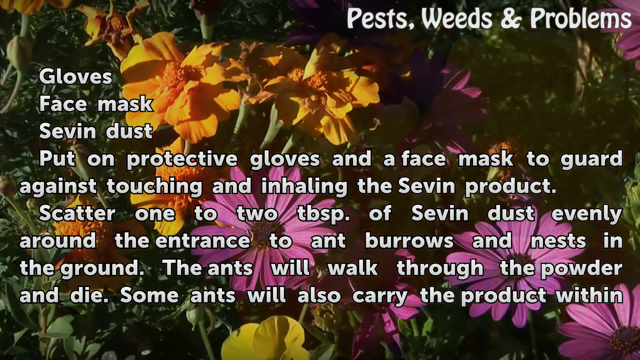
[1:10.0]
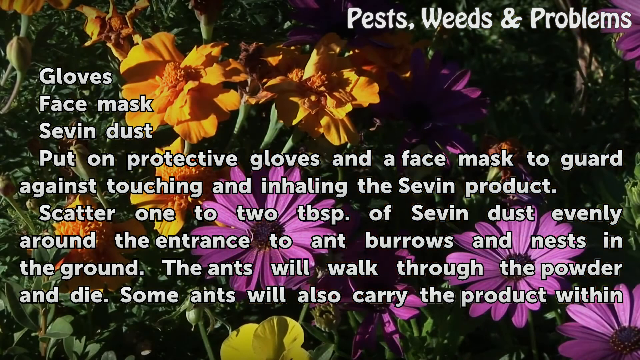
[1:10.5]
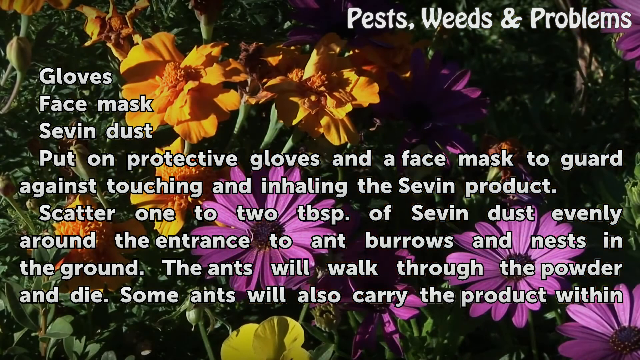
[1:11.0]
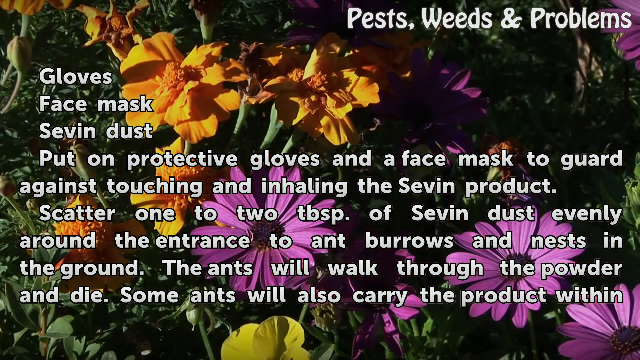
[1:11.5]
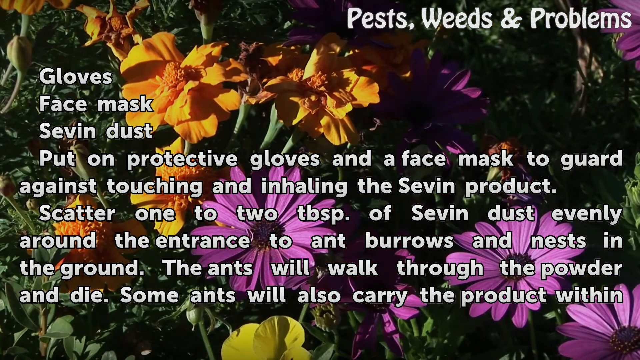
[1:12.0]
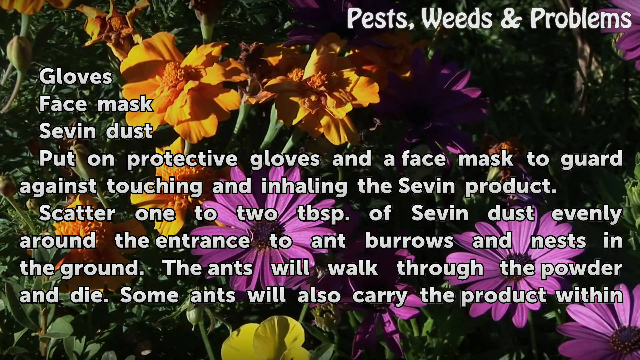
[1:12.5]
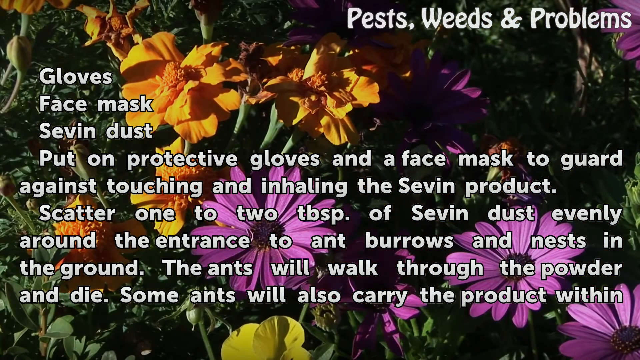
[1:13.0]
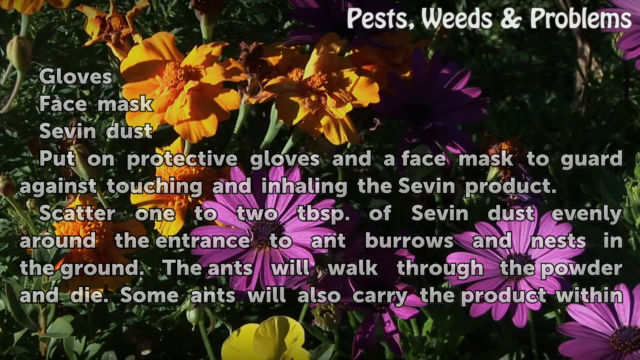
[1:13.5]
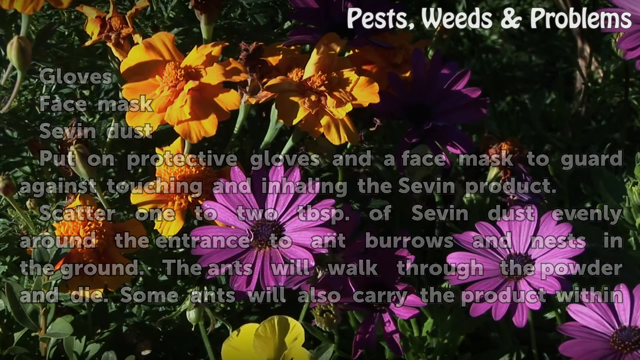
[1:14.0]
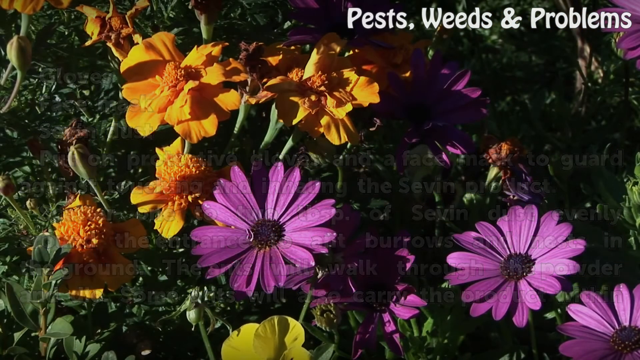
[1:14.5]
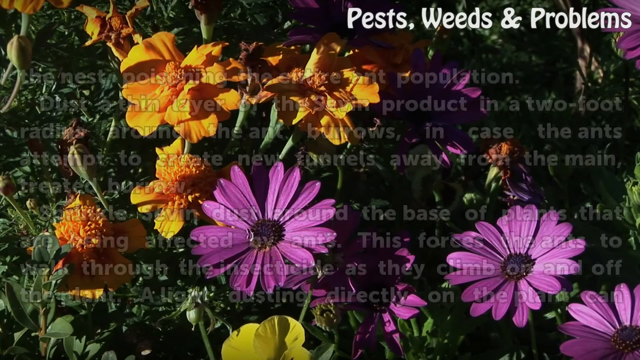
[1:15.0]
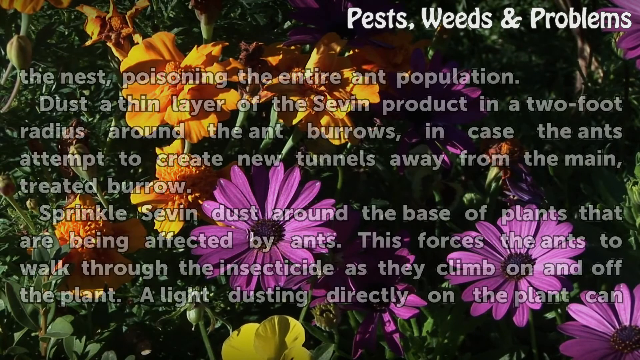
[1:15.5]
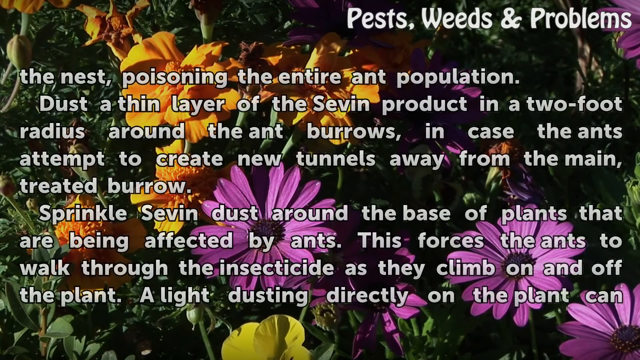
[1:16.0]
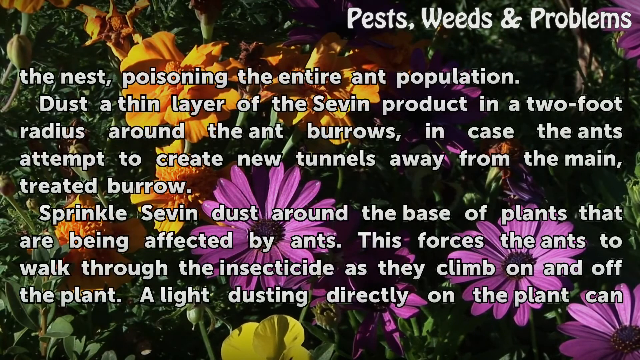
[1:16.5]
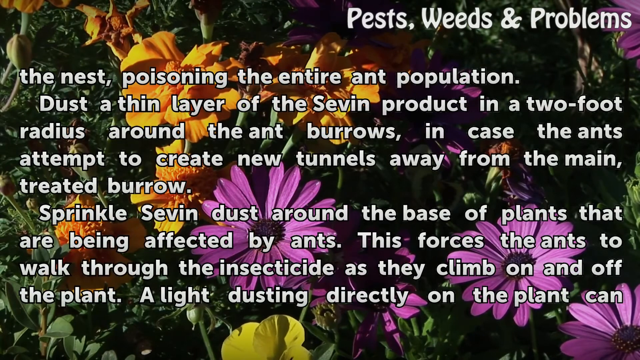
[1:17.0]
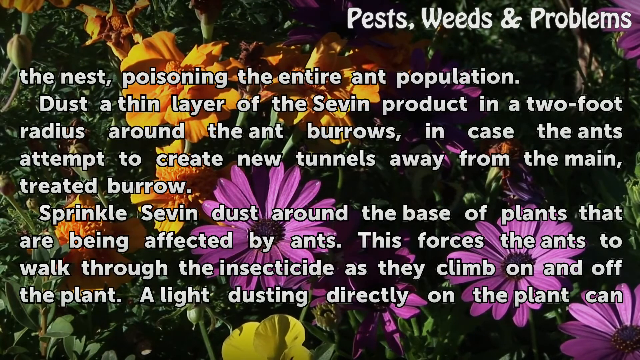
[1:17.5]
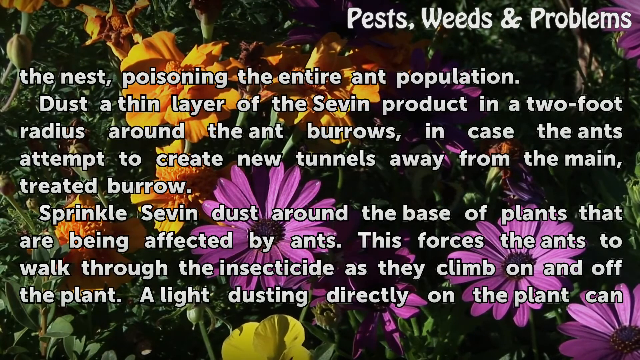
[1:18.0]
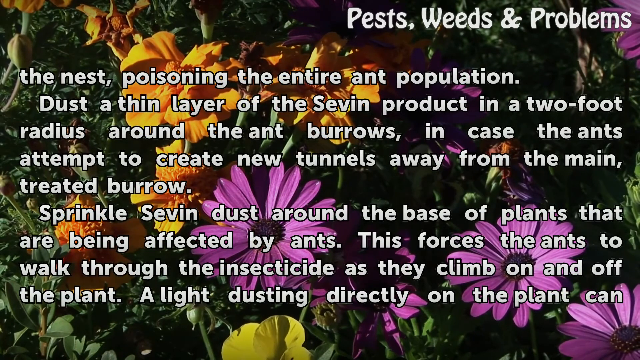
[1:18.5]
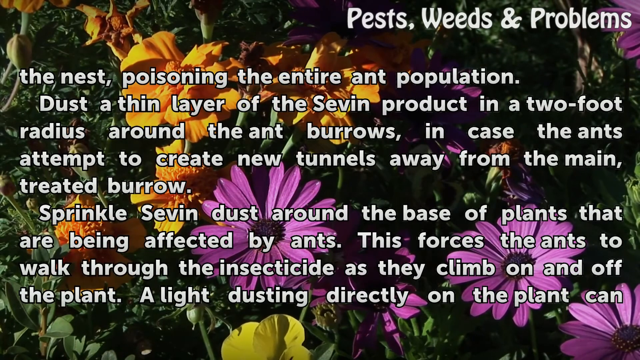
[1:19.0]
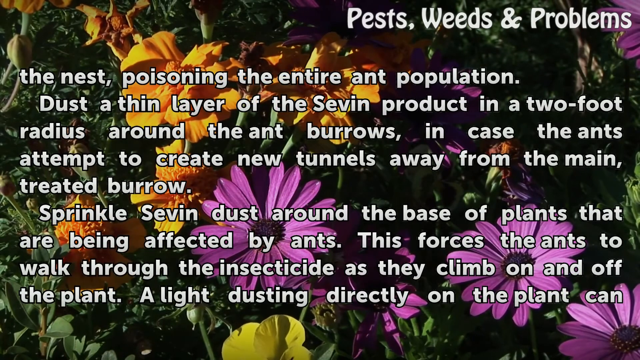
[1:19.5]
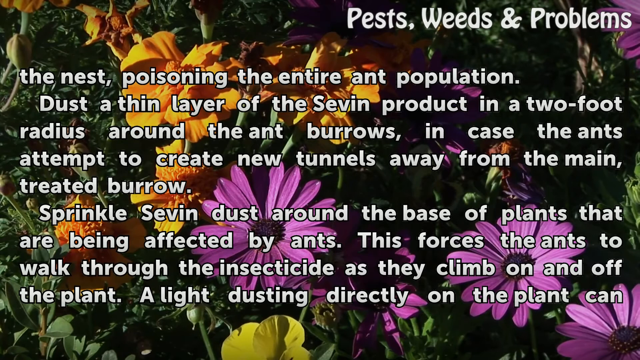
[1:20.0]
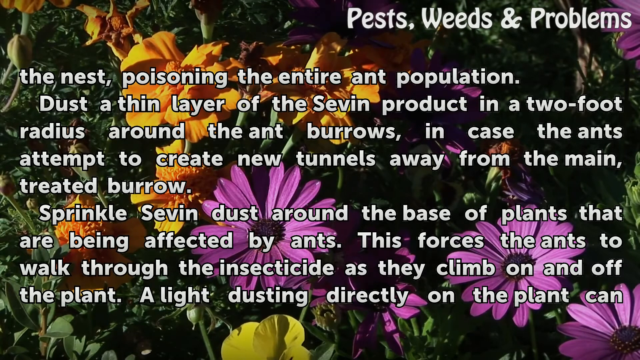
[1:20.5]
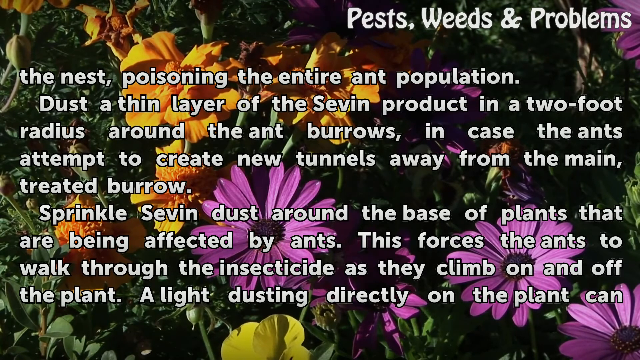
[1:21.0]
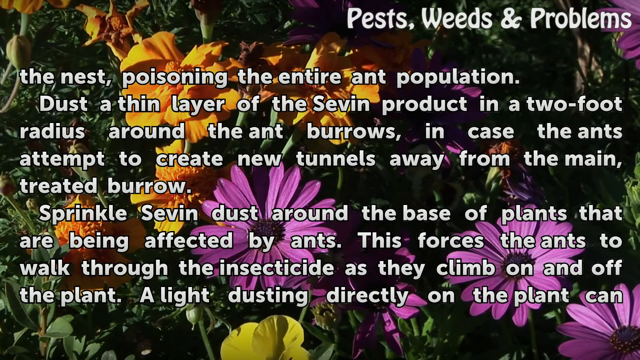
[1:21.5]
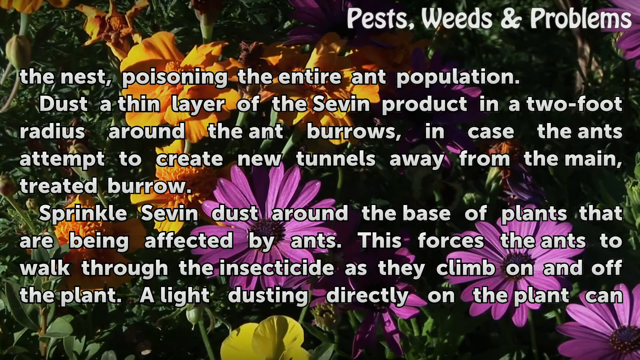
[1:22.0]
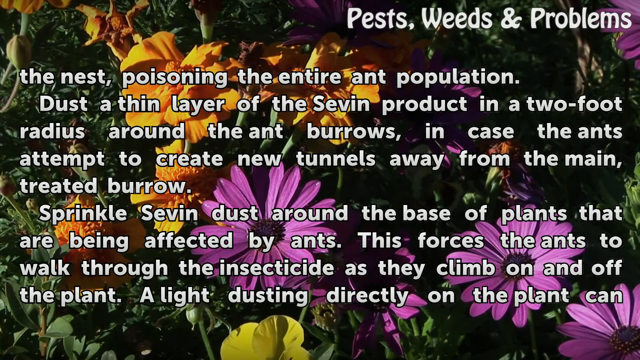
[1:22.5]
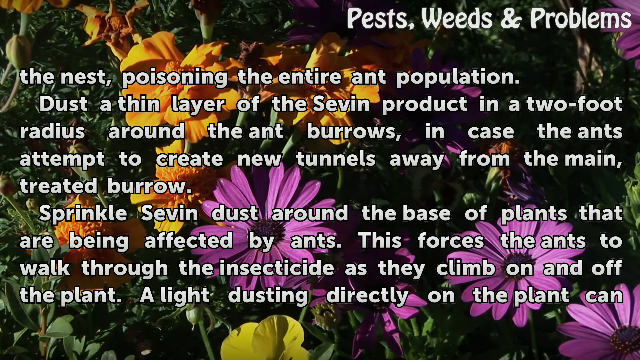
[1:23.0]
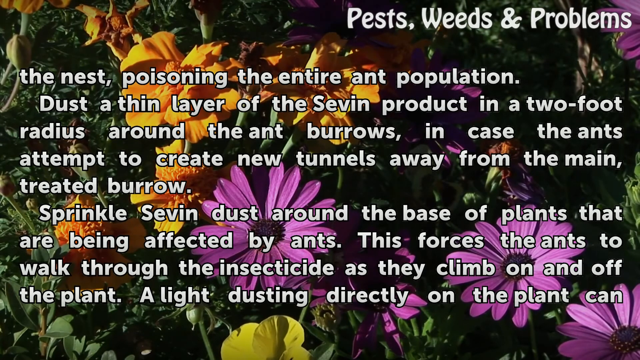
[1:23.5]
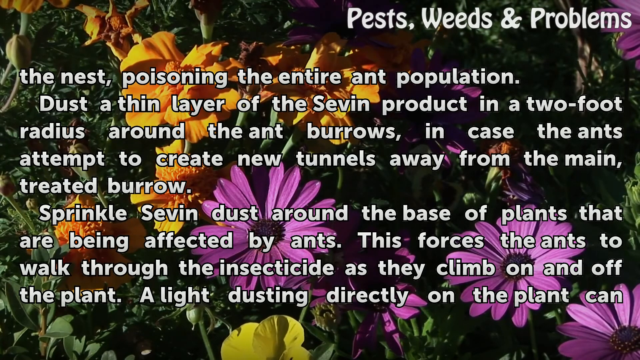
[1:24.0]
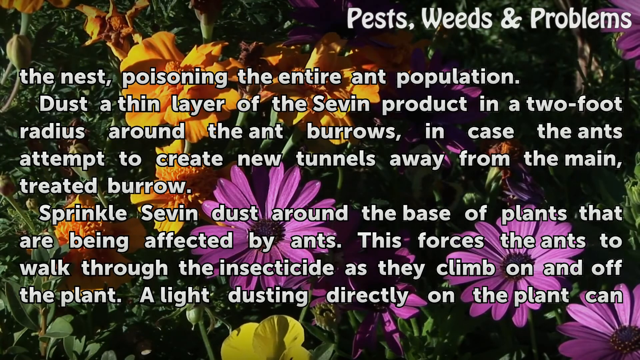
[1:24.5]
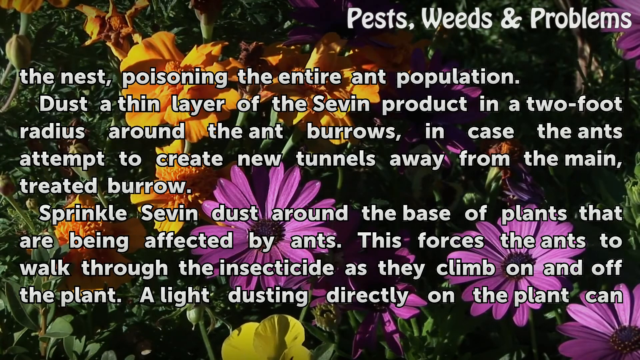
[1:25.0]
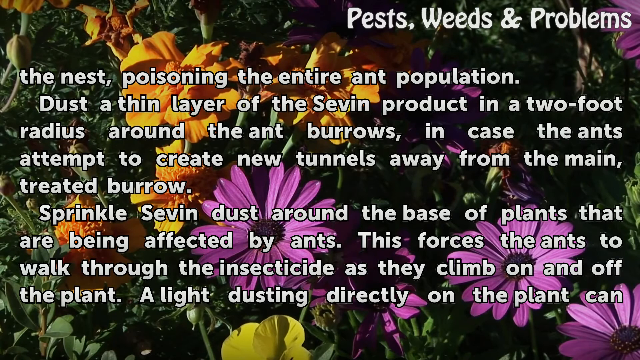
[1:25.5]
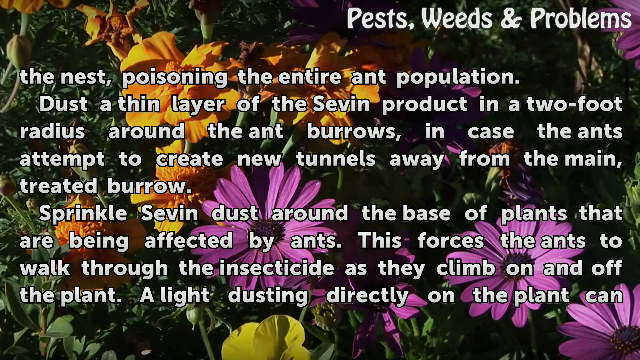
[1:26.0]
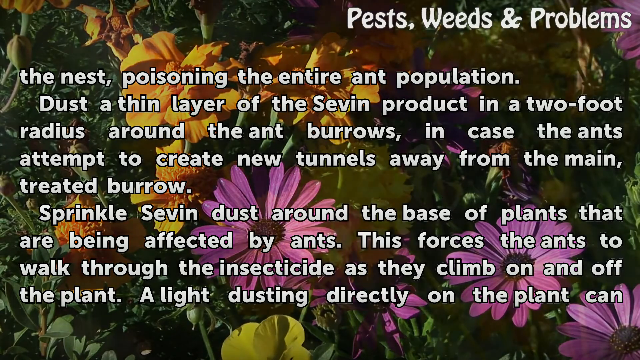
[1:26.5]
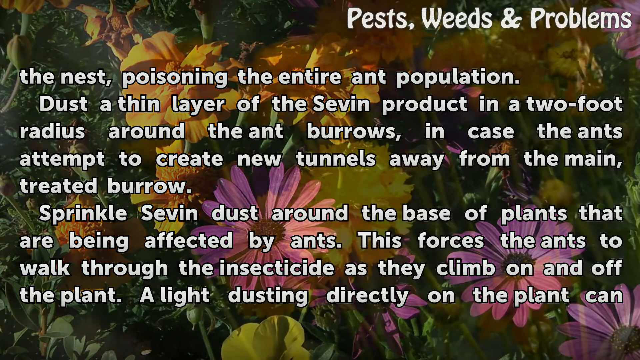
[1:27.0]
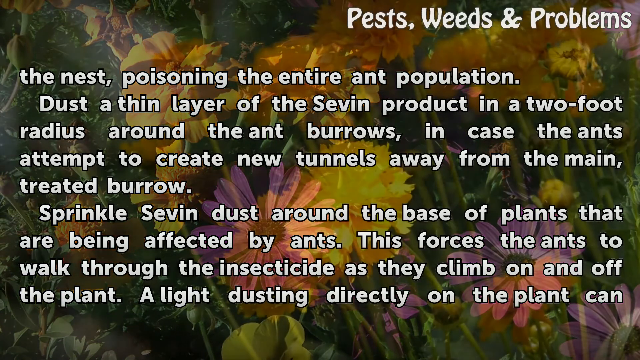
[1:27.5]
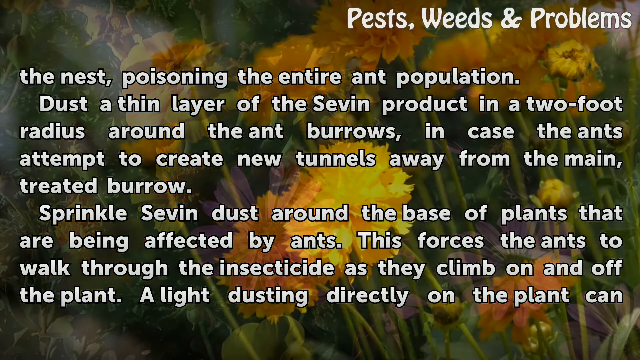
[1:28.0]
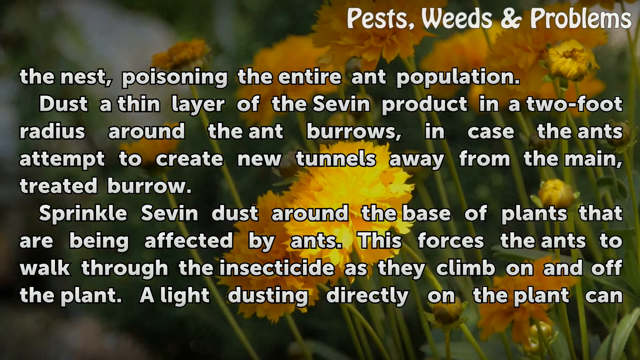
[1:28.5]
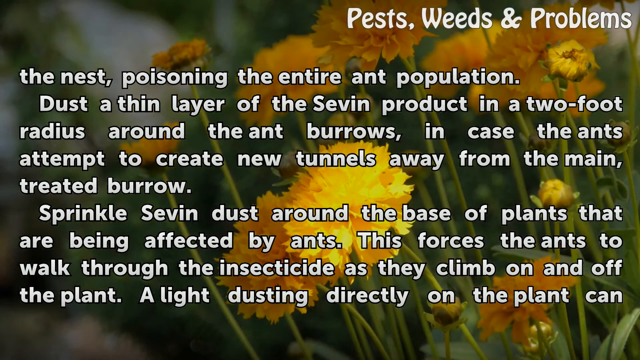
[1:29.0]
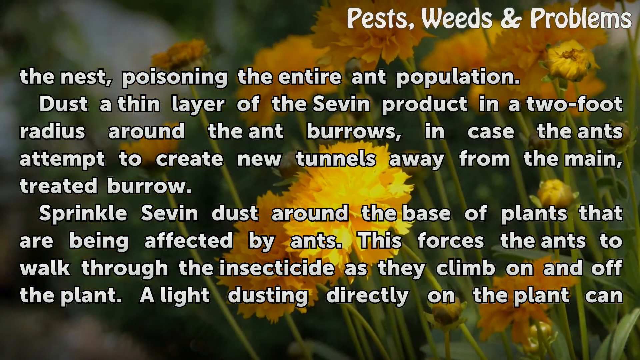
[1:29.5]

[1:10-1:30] A new background shows more flowers, with some yellow ones in the top left and some daisy-like purple ones in the bottom right of the screen. More text reads: "the nest, poisoning the entire ant population. Dust a thin layer of the SEVIN product in a two foot radius around the ant burrows in case the ants attempt to create new tunnels away from the main treated burrow. Sprinkle SEVIN dust around the base of plants that are being affected by ants. This forces the ants to walk through the insecticide as they climb on and off the plant."